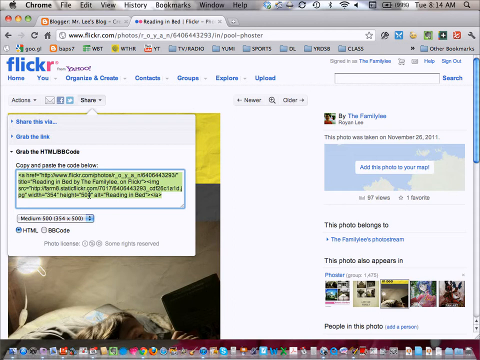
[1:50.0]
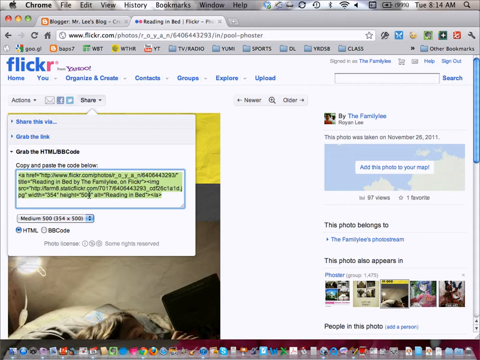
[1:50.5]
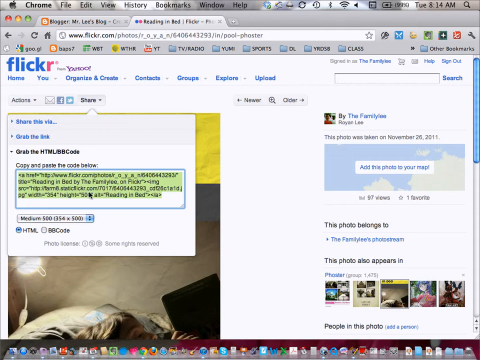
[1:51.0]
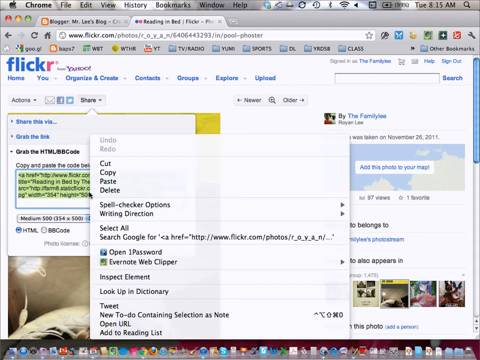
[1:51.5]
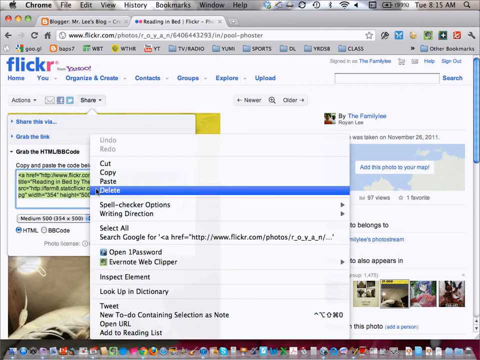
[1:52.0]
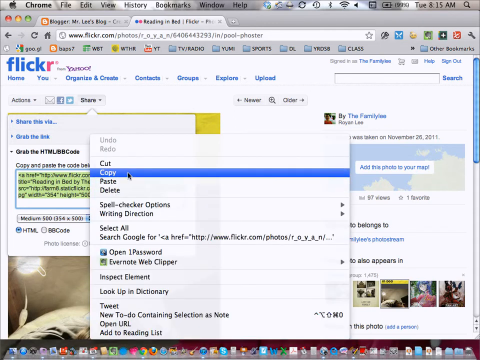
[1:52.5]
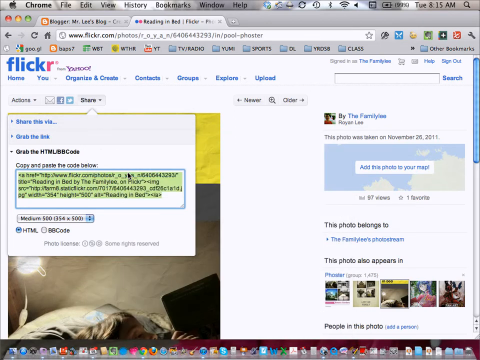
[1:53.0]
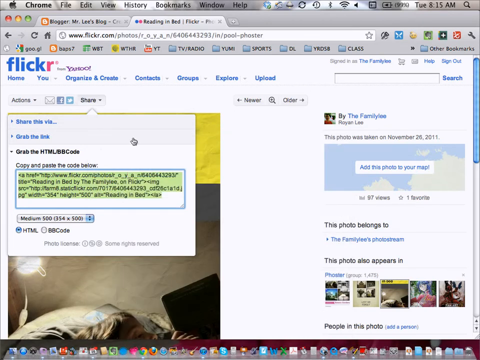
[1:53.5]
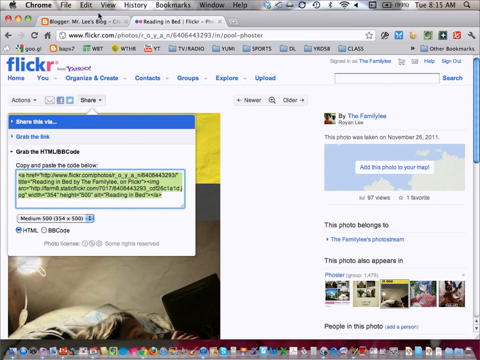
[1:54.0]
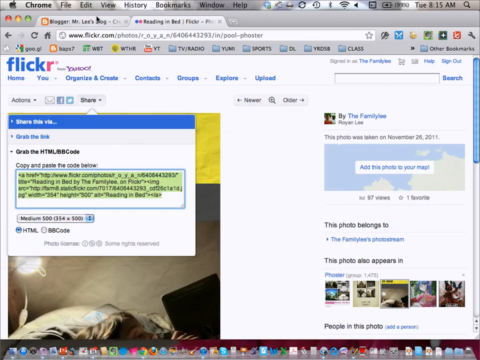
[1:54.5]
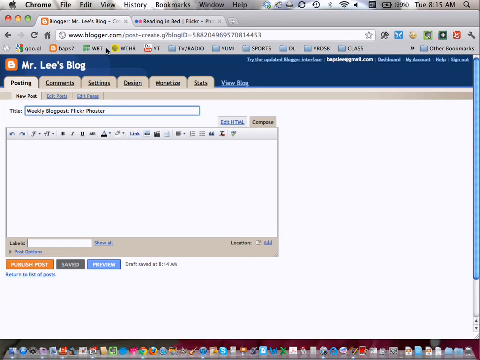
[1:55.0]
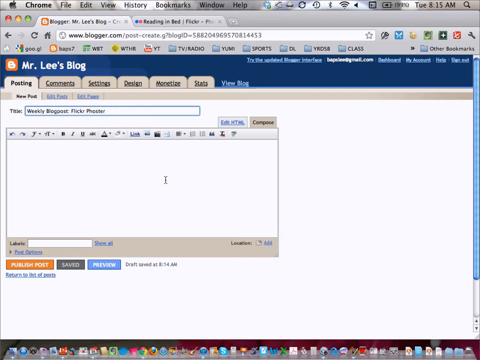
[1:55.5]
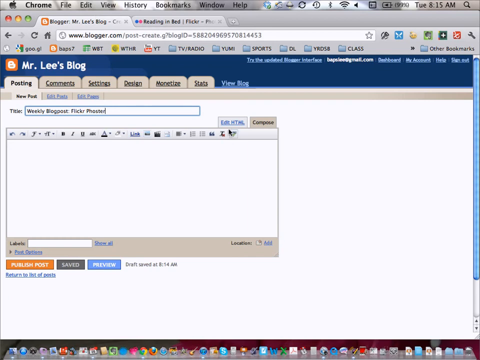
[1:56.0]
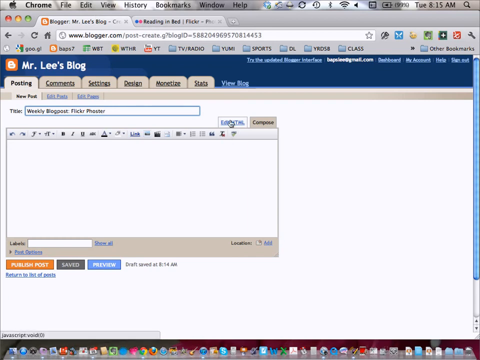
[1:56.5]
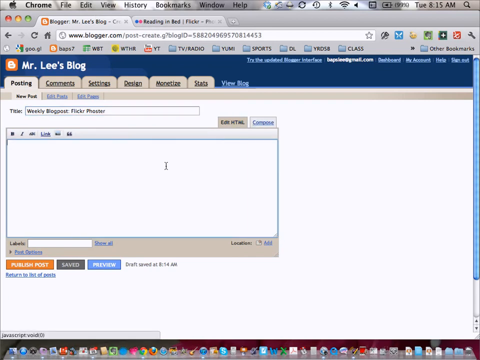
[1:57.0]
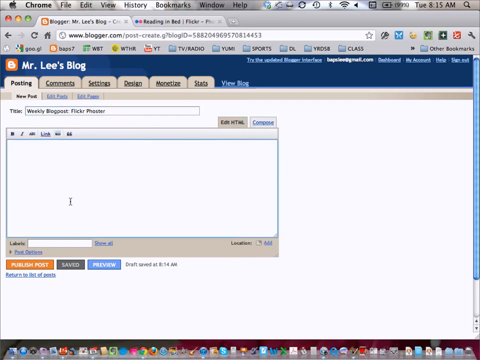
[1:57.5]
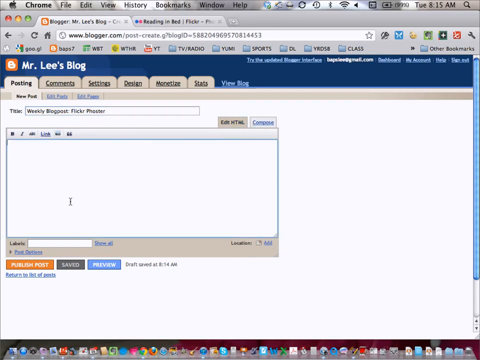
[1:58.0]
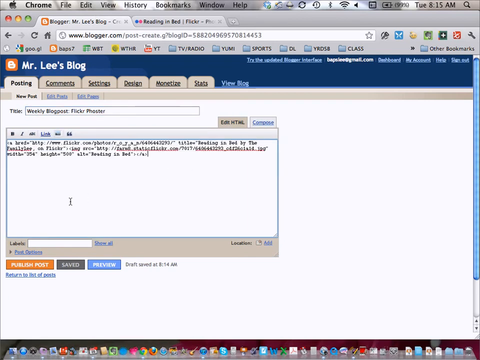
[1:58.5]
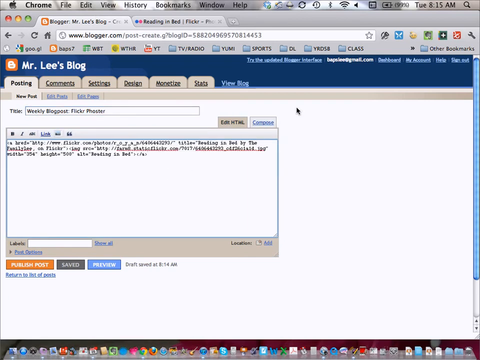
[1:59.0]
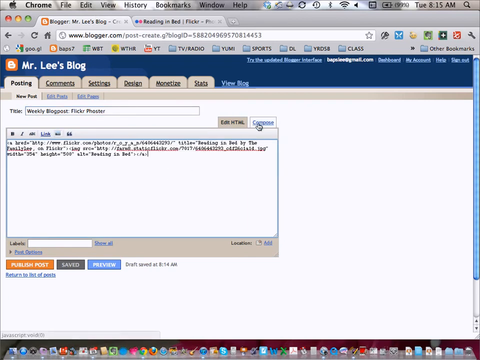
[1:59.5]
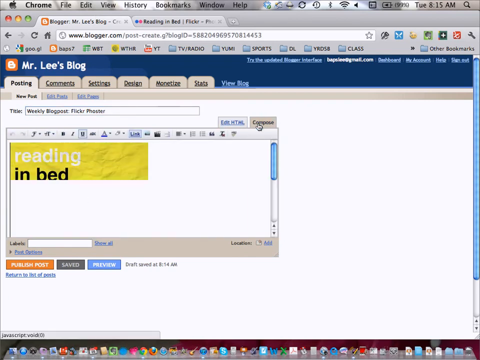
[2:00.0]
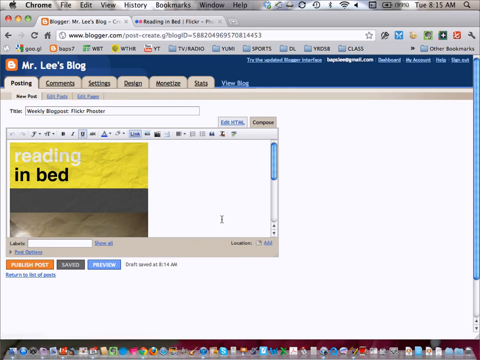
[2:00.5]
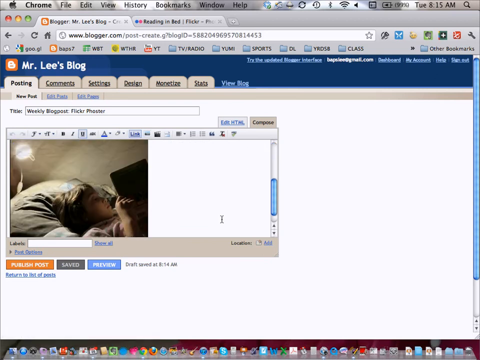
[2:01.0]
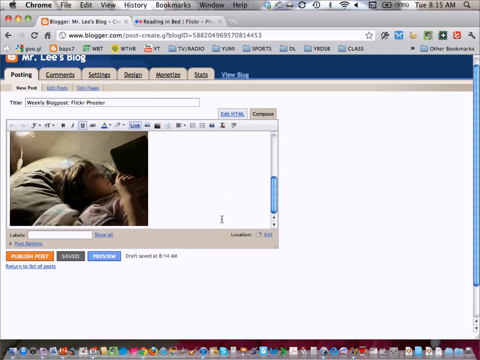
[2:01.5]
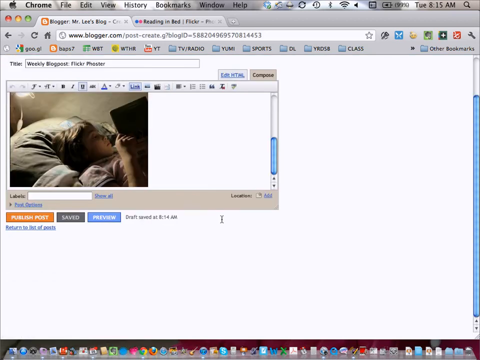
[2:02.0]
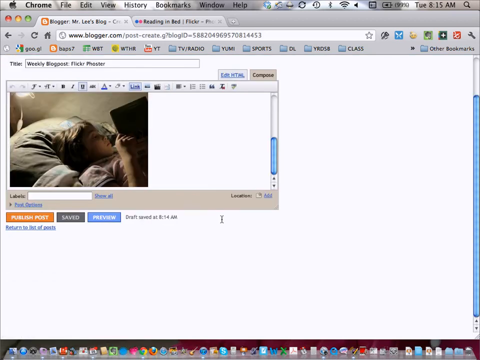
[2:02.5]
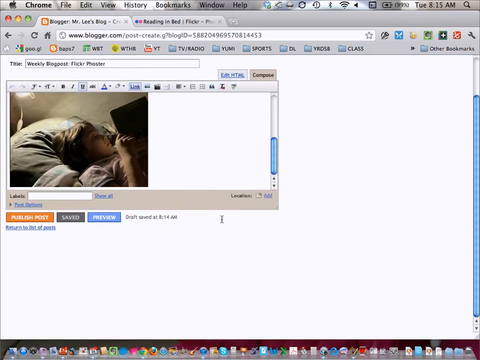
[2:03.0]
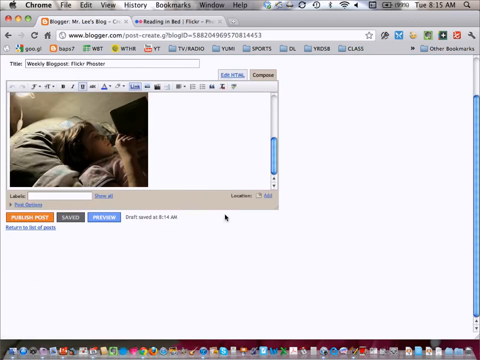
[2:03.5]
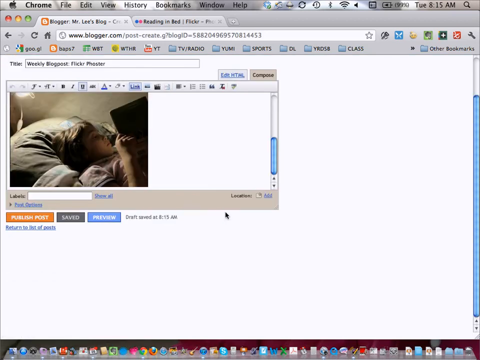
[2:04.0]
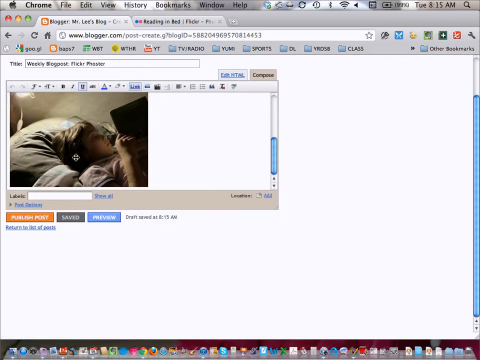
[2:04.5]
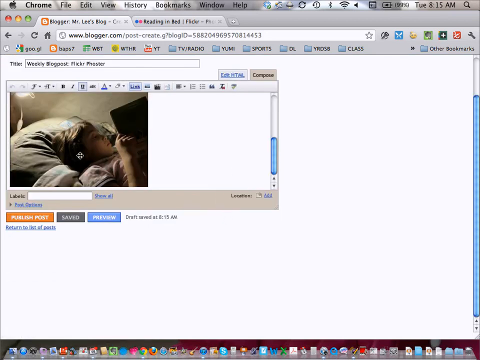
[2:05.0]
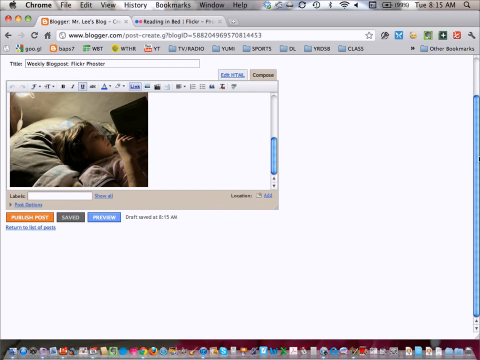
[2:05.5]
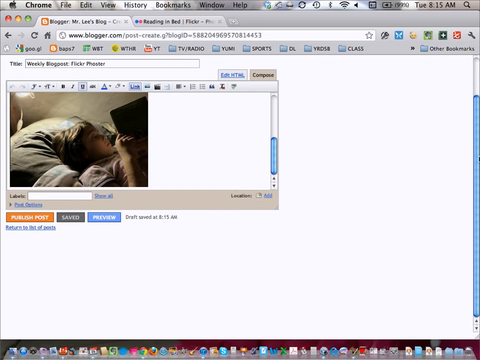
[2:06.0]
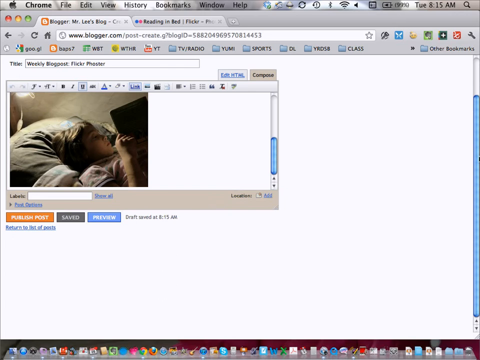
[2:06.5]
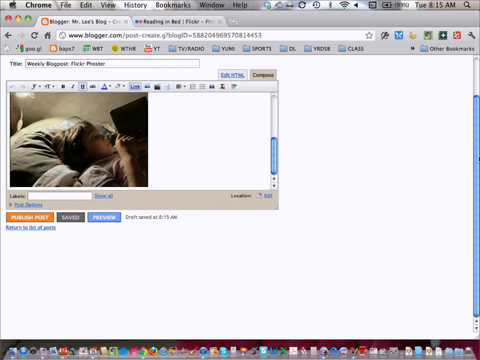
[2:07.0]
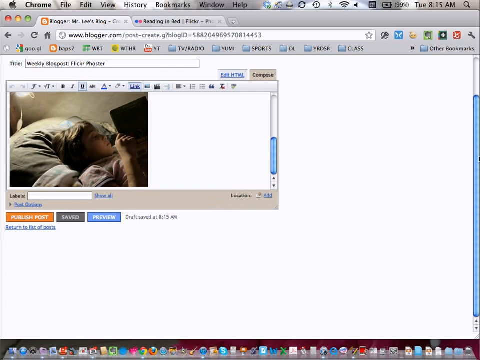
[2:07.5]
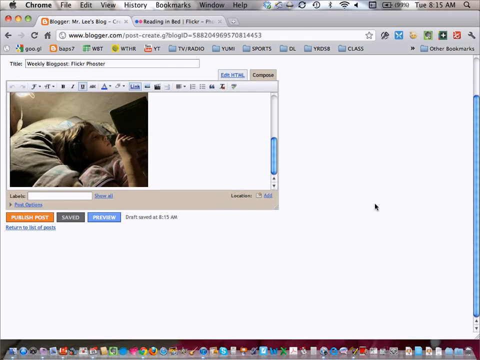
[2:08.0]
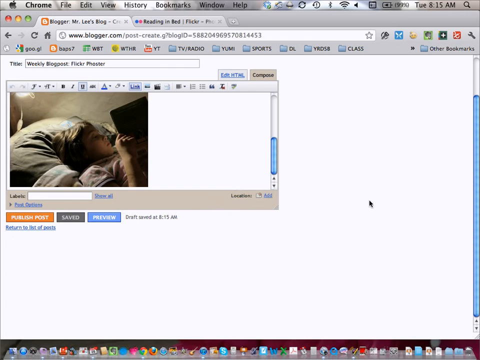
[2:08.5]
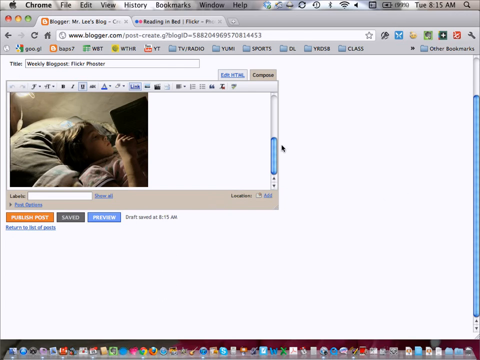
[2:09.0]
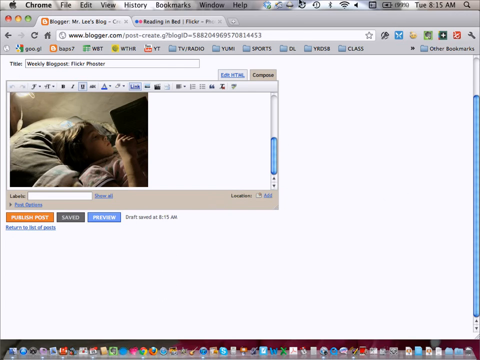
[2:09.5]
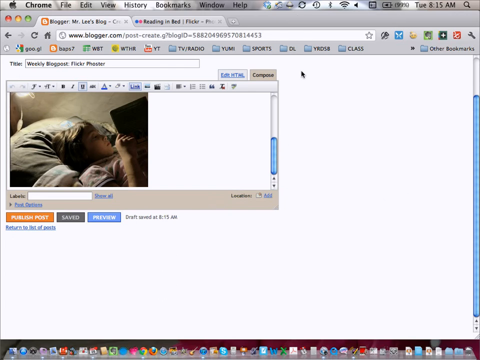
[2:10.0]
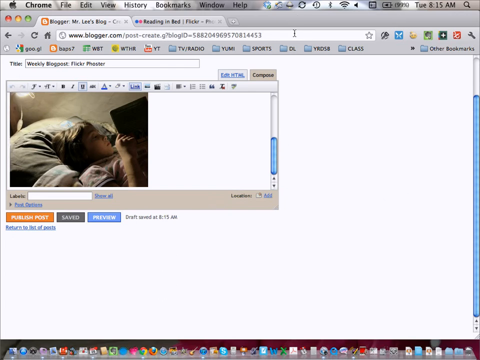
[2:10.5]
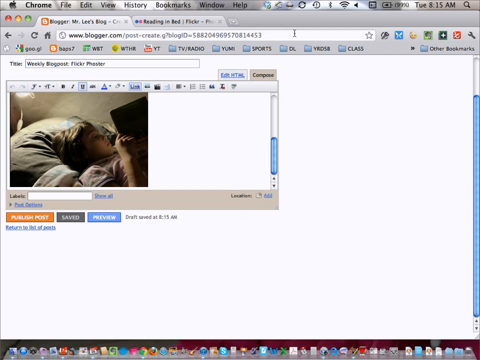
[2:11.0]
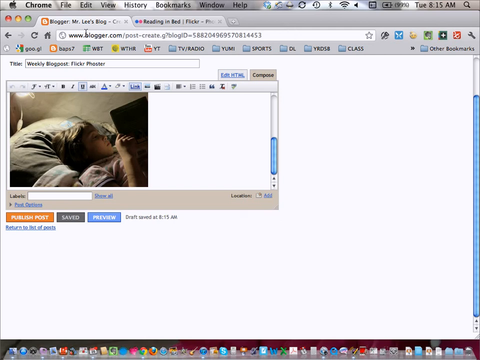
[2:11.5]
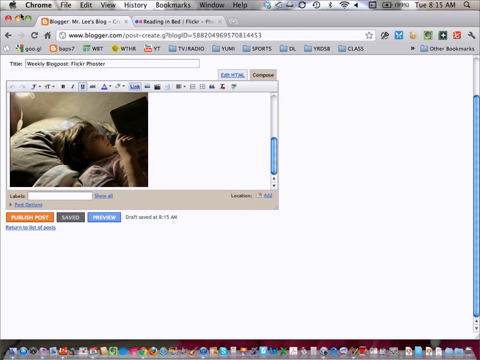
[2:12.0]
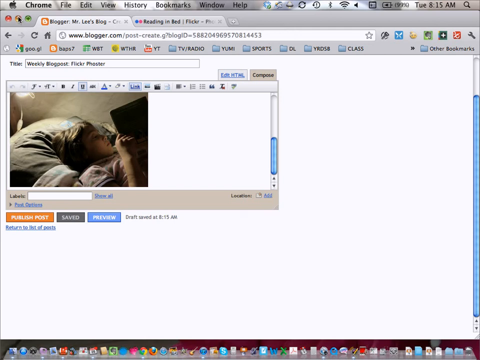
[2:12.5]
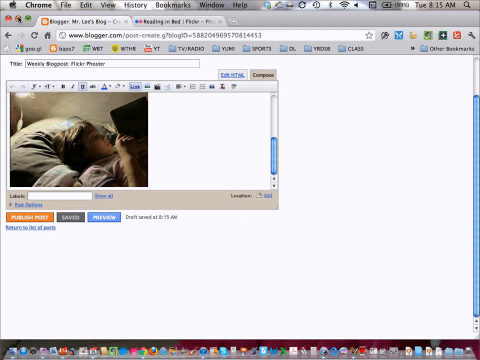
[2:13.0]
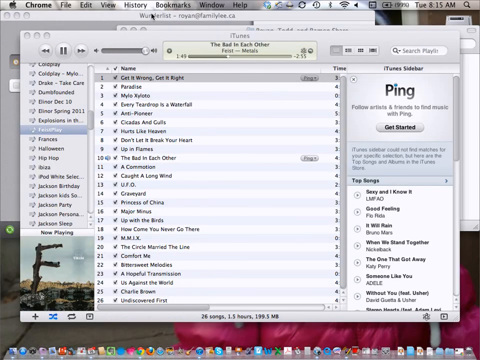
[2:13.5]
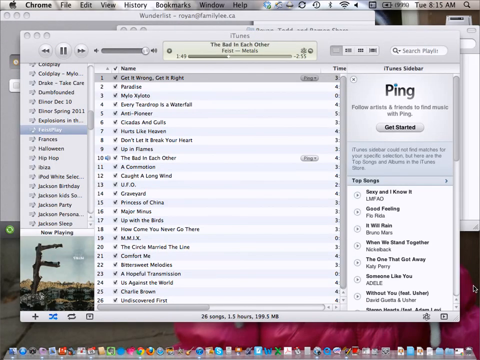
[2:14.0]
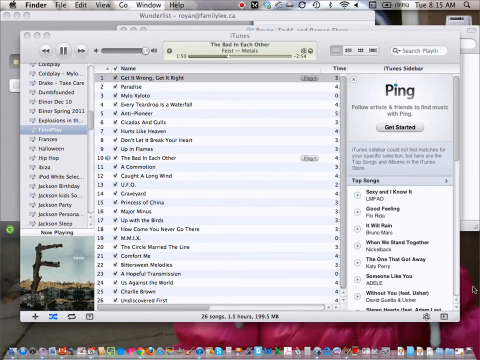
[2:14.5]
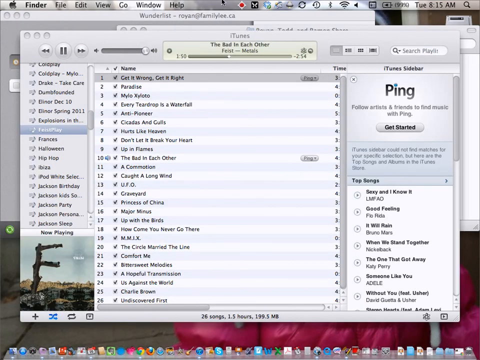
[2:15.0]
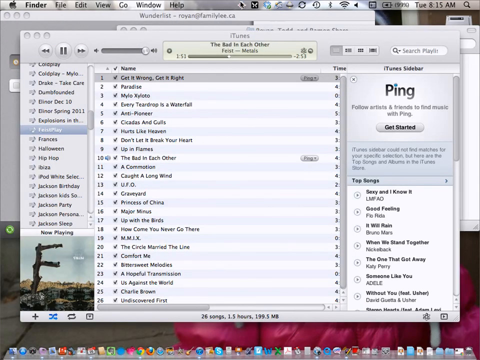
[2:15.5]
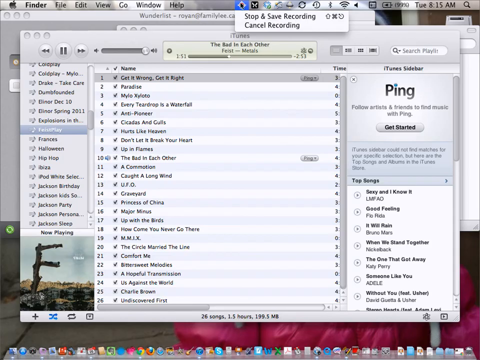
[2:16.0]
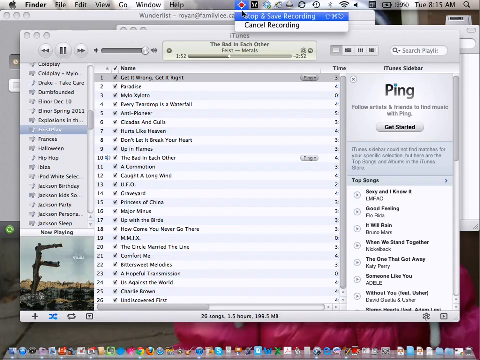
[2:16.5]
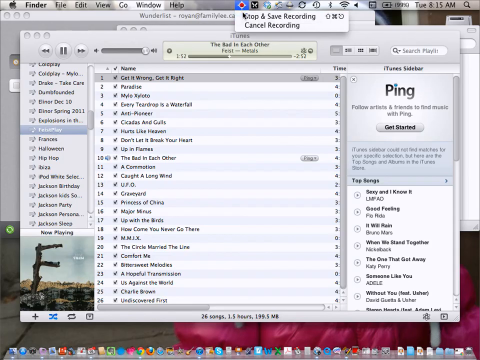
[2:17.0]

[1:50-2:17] The HTML code is on the left-hand side of the screen, entirely highlighted in yellow. The user right-clicks and selects the copy option, then goes back to the first tab in the Google Chrome browser, which shows the new post section of Mr. Lee's blog on the Blogspot website. They click in the new post text box, click the "Edit HTML" section, paste the HTML code copied from Flickr, and click the "Compose" section. Compose shows the same poster from Flickr inserted as an integrated image. The user then collapses the Google Chrome window, revealing the iTunes application, goes to the top menu bar of the Mac, clicks the red circular button, and clicks "Stop and Save Recording" to stop the screen recording.